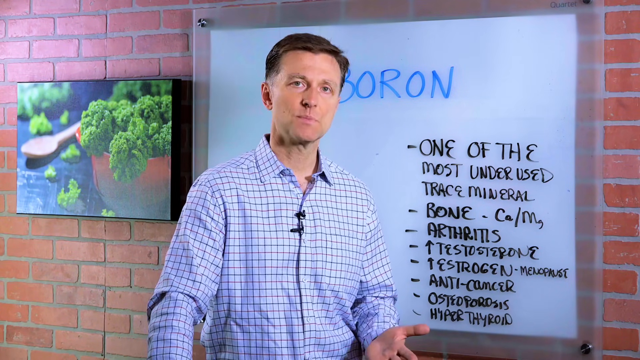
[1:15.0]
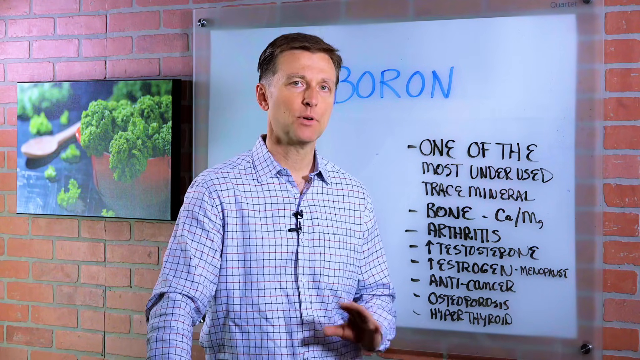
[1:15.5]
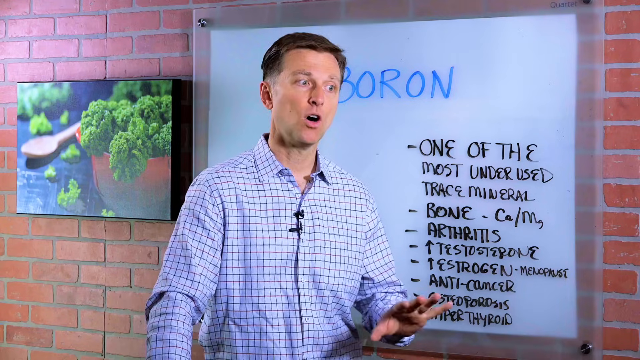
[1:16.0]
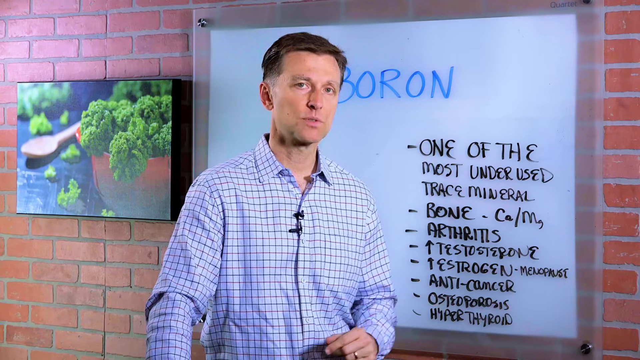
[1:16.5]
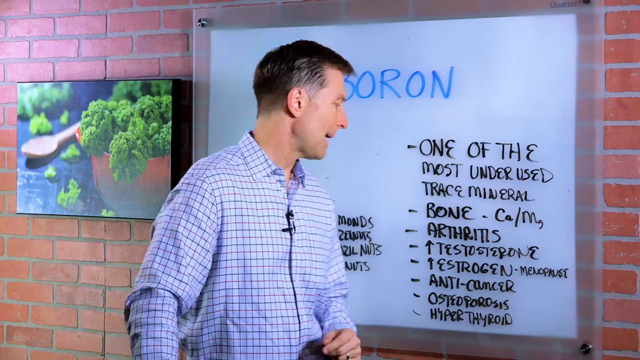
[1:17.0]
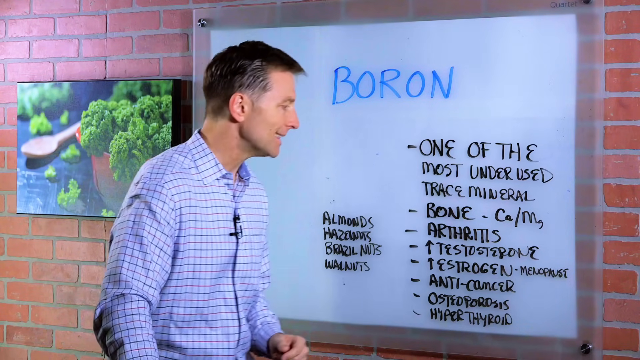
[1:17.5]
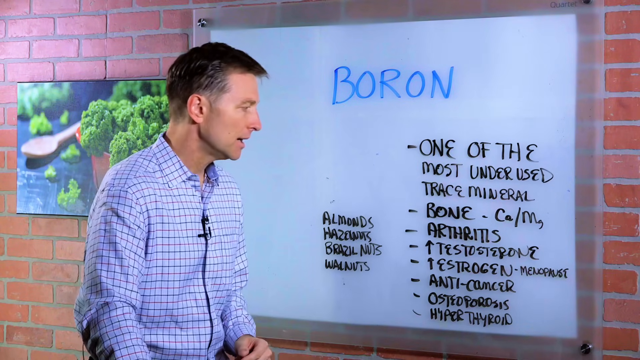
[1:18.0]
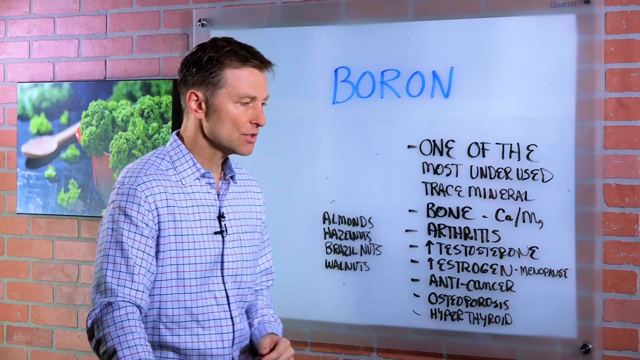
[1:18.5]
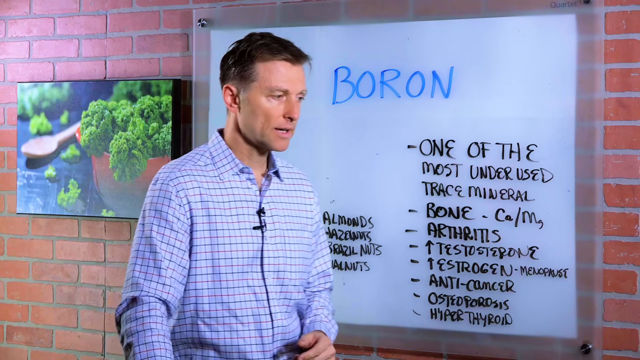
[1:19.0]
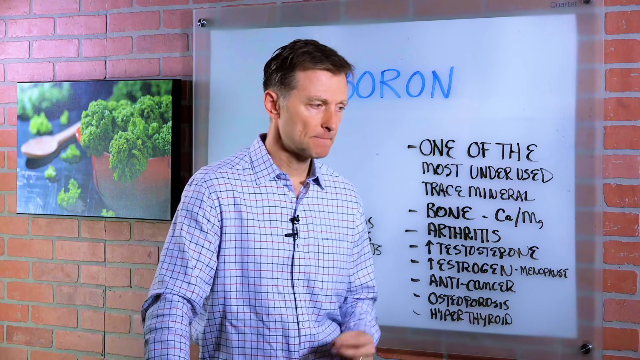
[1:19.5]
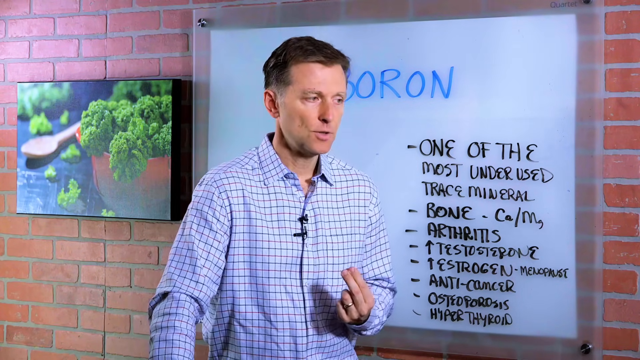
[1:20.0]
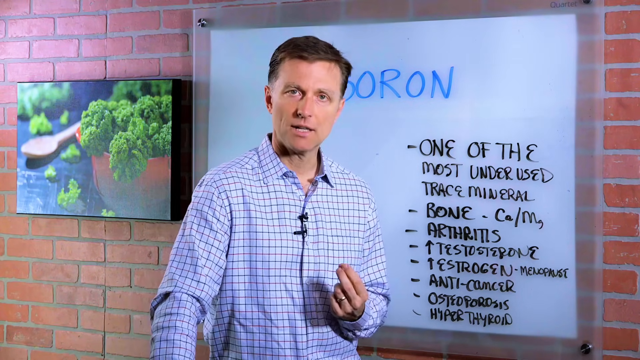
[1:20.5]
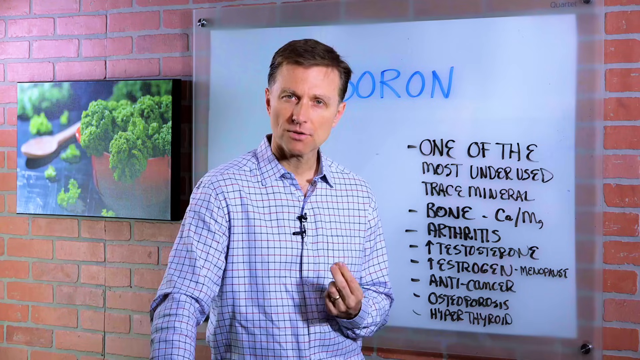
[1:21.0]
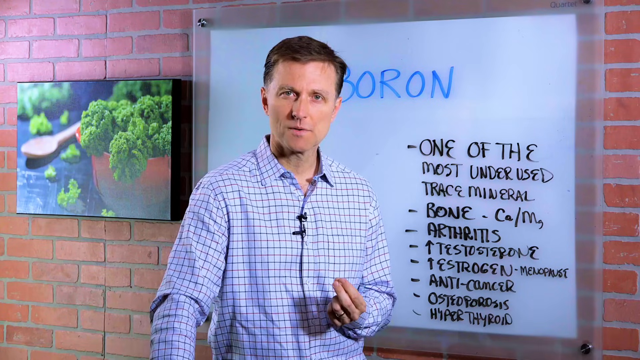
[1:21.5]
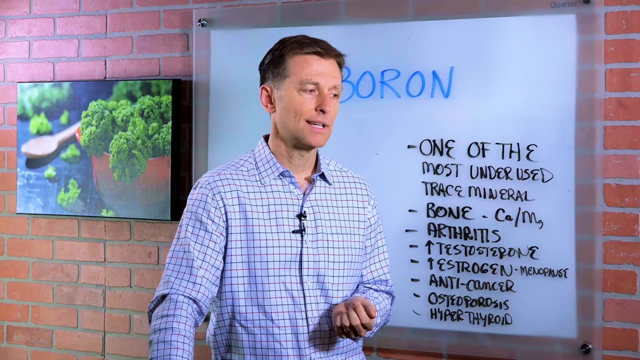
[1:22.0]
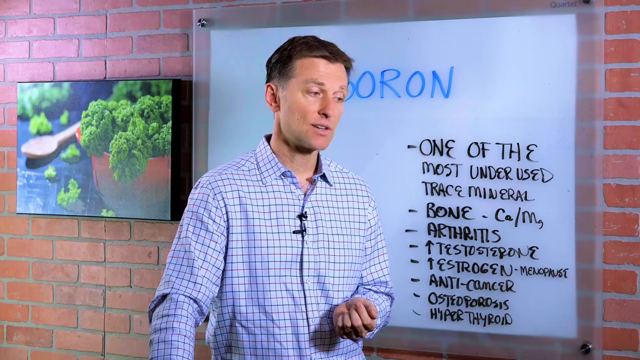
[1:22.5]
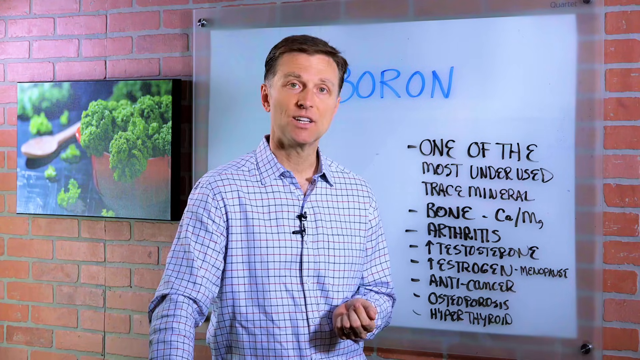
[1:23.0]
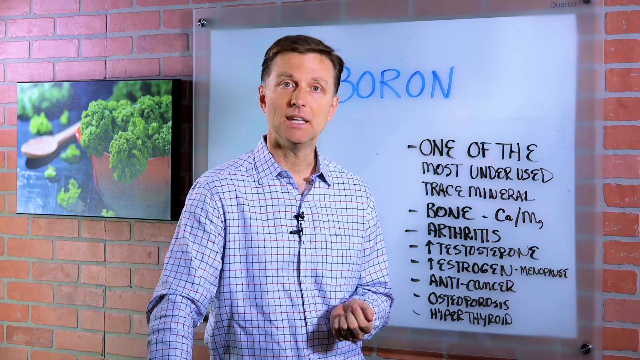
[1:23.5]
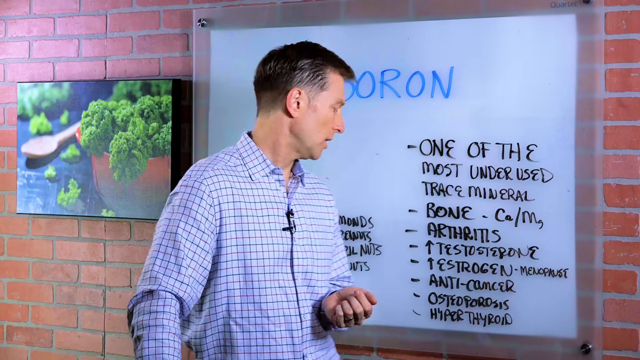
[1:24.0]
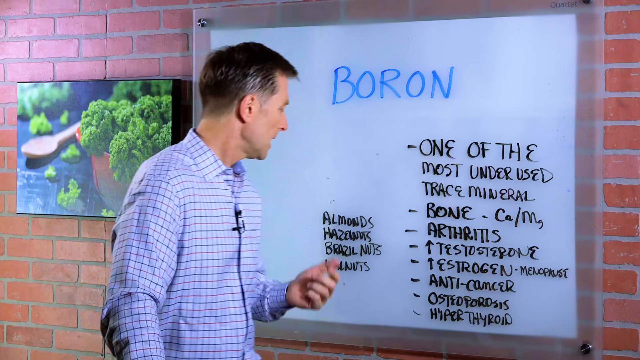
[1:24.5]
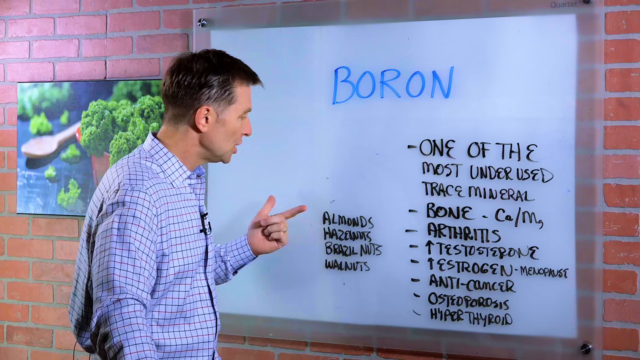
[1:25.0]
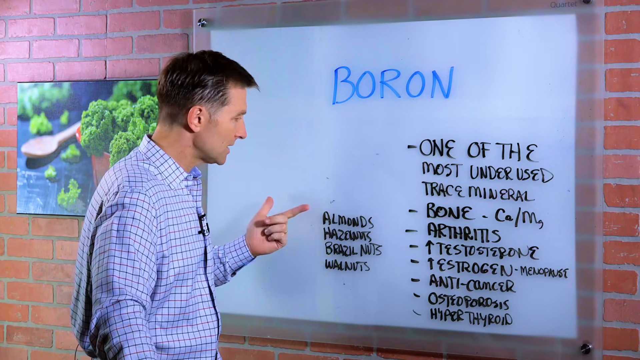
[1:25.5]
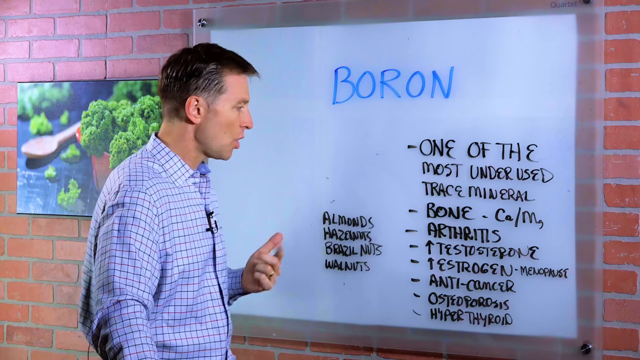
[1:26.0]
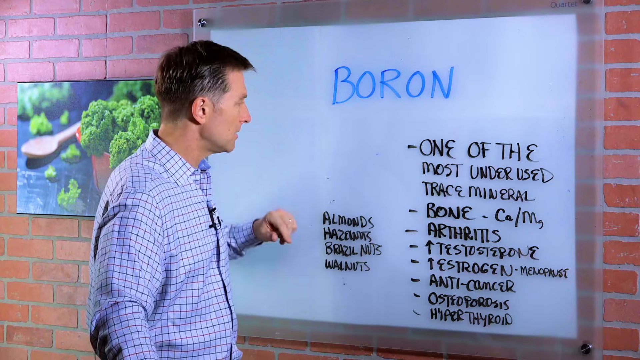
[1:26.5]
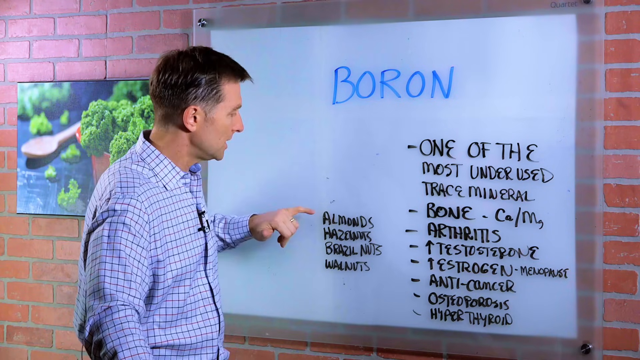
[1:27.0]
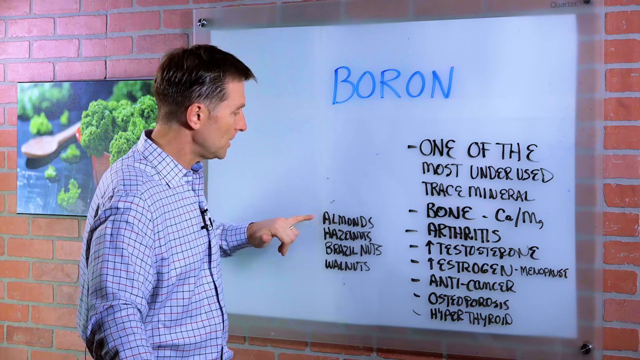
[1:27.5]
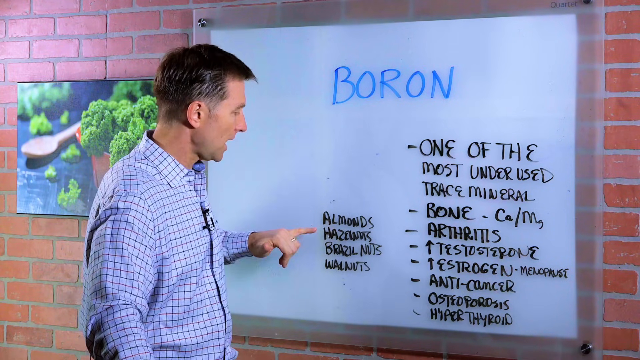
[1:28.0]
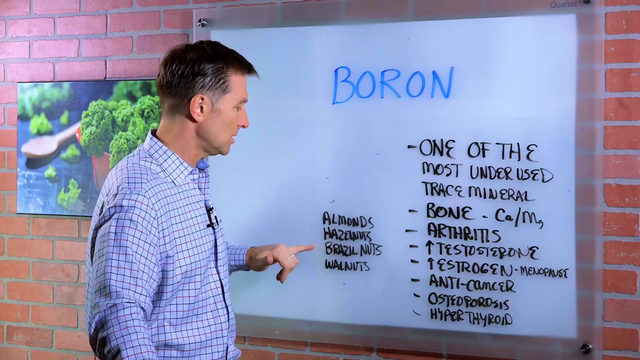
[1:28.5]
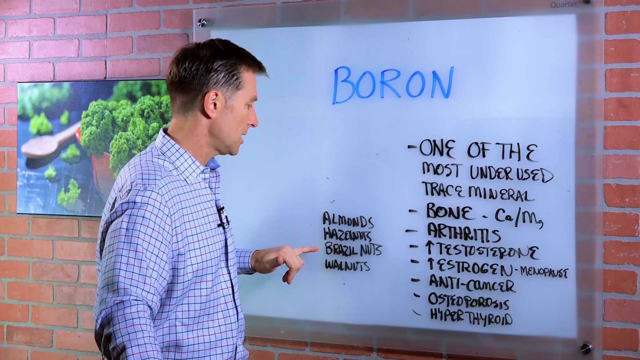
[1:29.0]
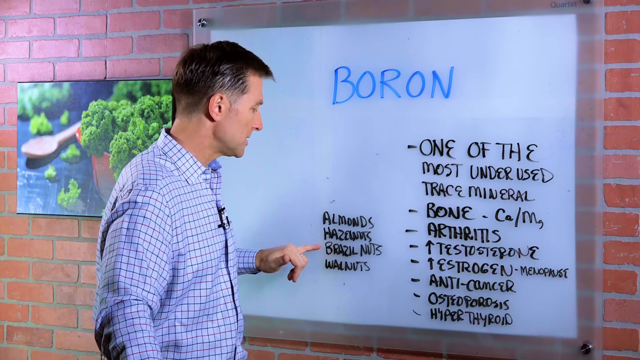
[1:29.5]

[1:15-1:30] A man with short brown hair, wearing a light blue long-sleeve button-up shirt, stands in front of a whiteboard with the word "boron" written in blue. To the right of that it says "one of the most underrated trace minerals," then "bone," "arthritis," "testosterone," "estrogen," "anti-cancer," "osteoporosis," and "hypothyroid," apparently the things boron helps with. To the right of that it says "almonds, hazelnuts, brazelnuts, and peanuts." Everything is written in black except "boron," which is in blue. He has a small black camera clipped onto his shirt. To the right of the whiteboard is a small painting of a brown bowl with bright green broccoli inside, and beside the bowl is a light brown wooden spoon.